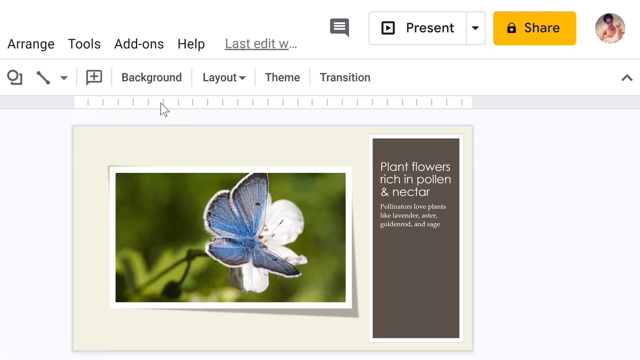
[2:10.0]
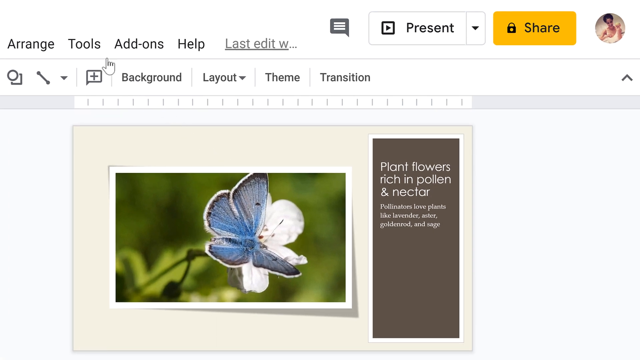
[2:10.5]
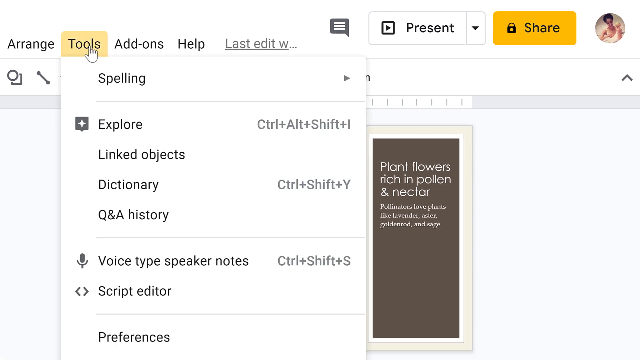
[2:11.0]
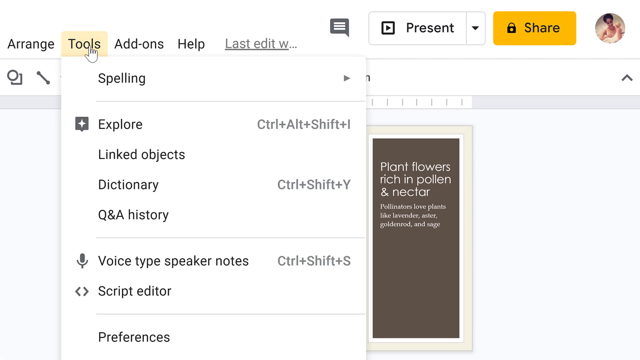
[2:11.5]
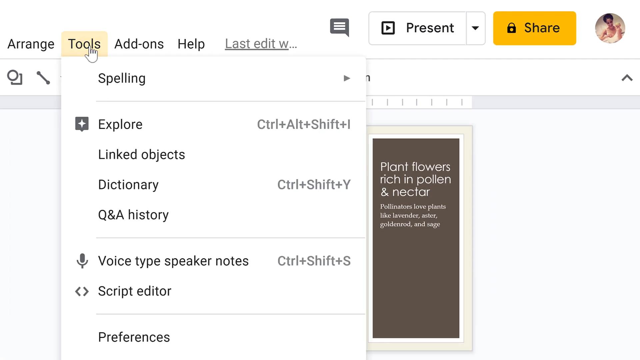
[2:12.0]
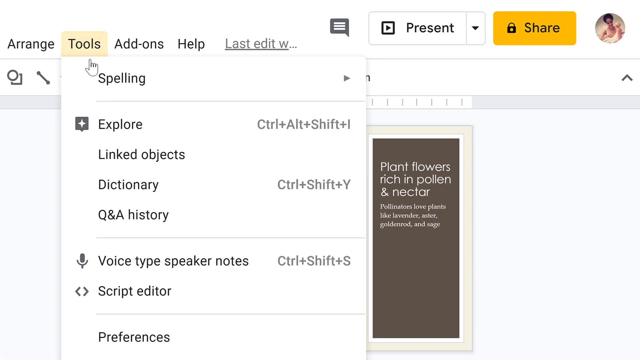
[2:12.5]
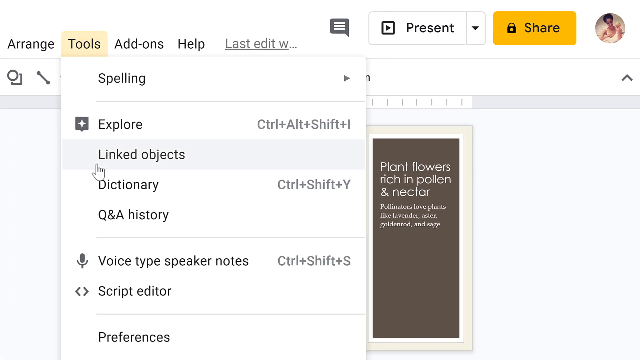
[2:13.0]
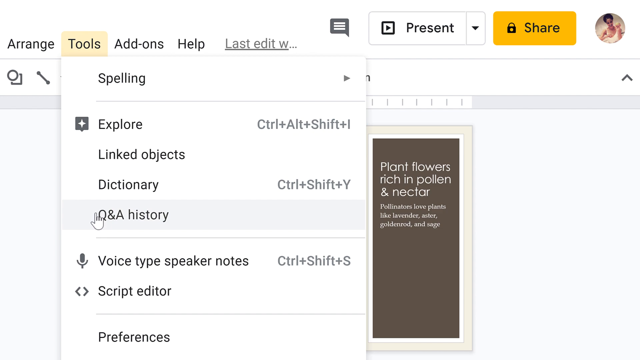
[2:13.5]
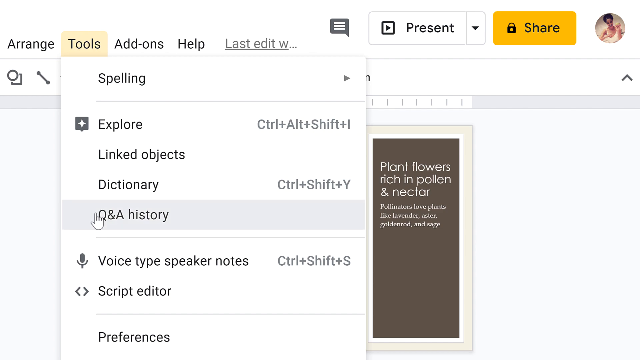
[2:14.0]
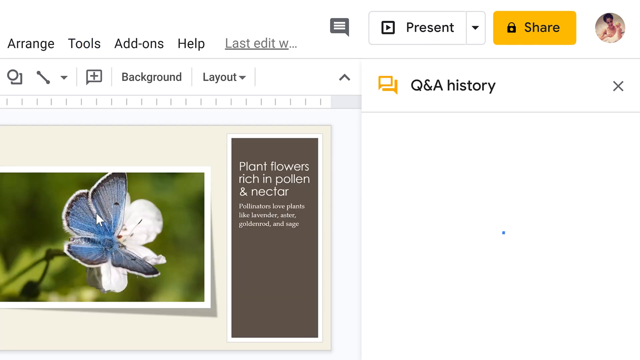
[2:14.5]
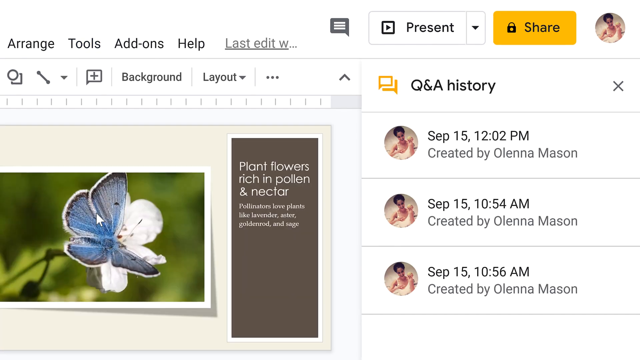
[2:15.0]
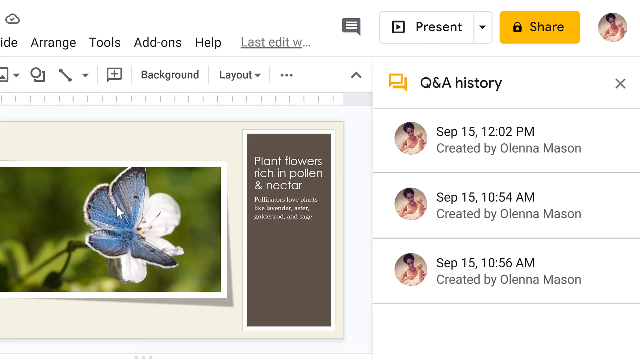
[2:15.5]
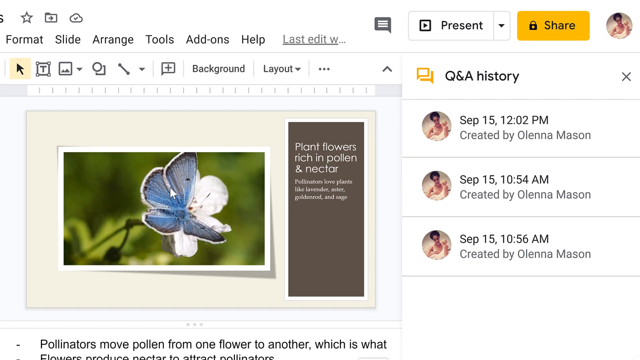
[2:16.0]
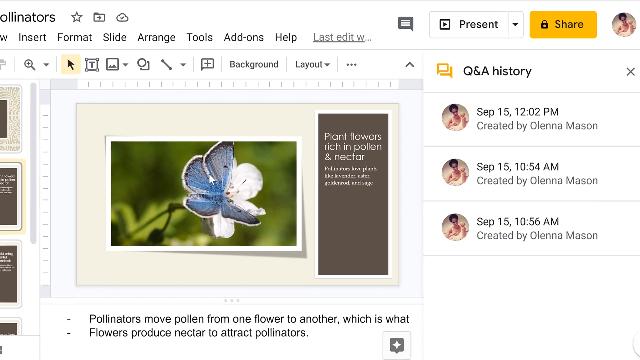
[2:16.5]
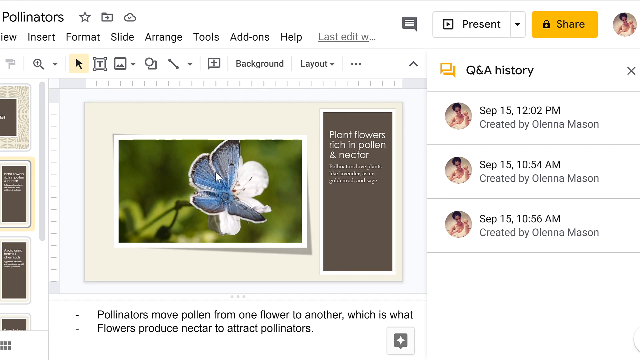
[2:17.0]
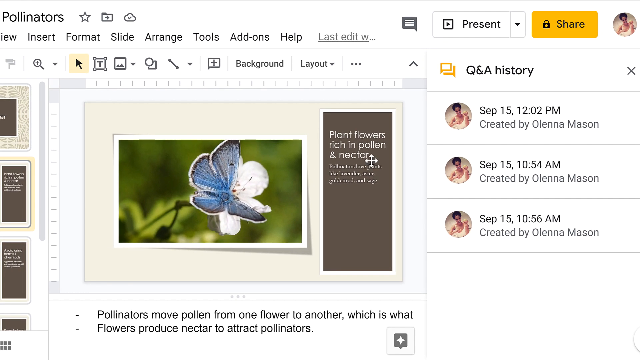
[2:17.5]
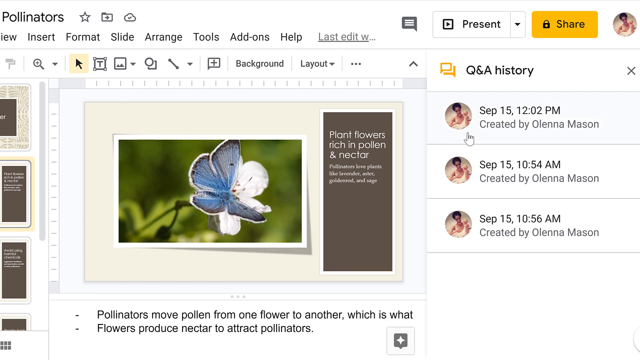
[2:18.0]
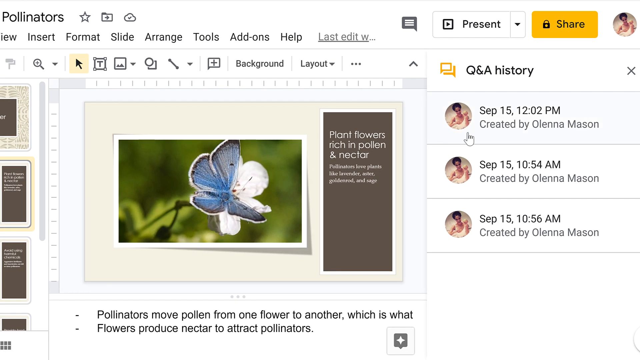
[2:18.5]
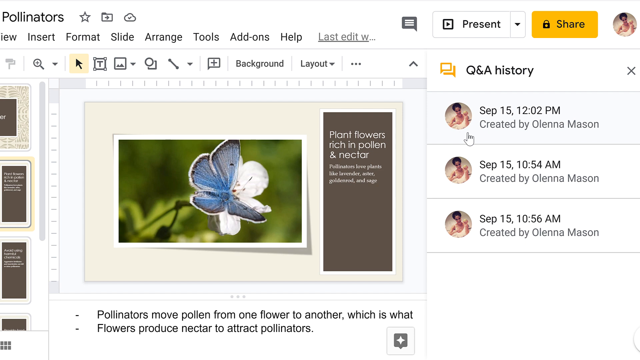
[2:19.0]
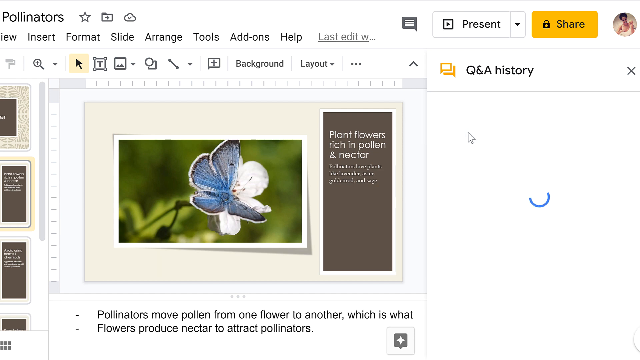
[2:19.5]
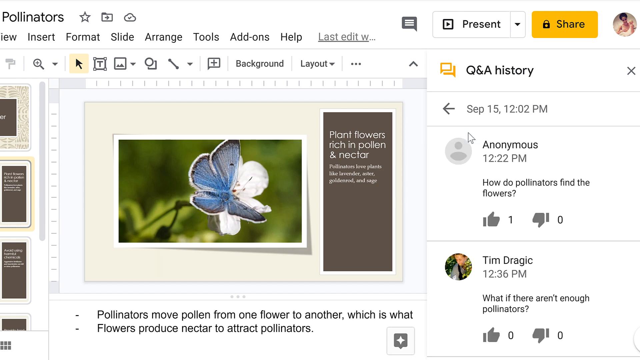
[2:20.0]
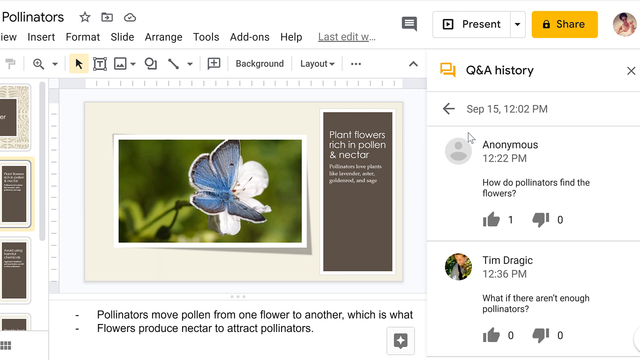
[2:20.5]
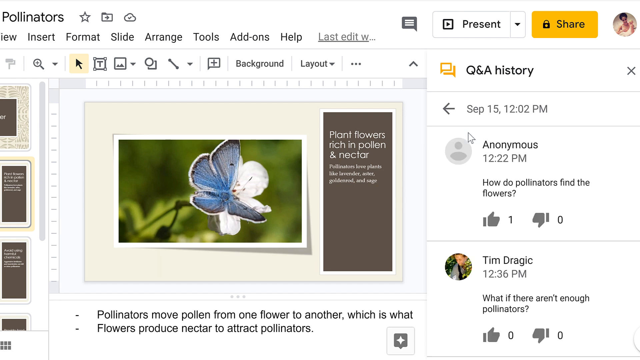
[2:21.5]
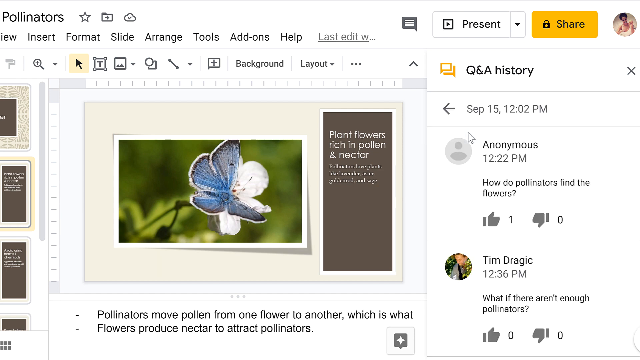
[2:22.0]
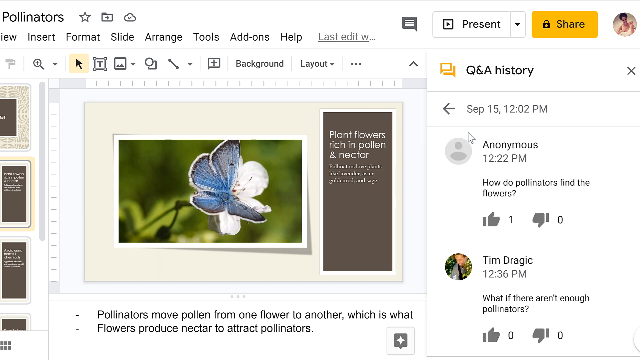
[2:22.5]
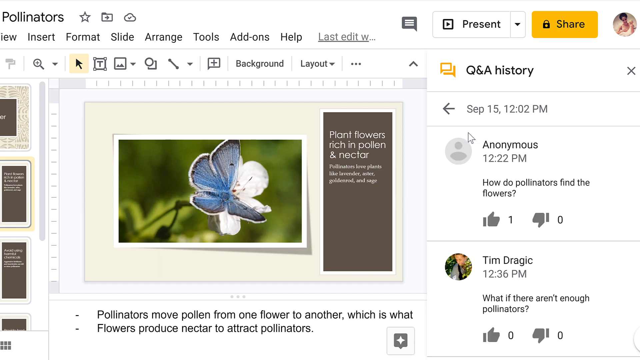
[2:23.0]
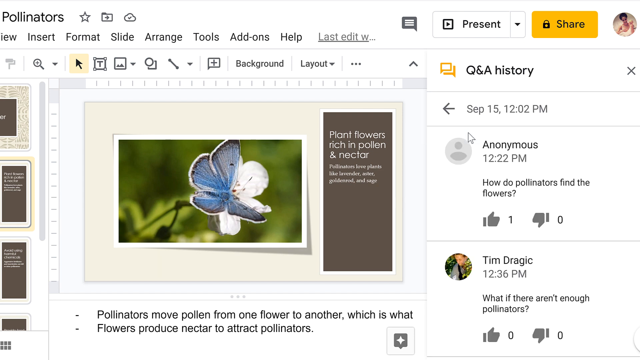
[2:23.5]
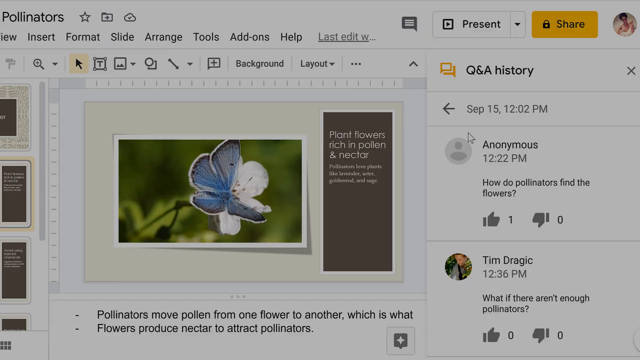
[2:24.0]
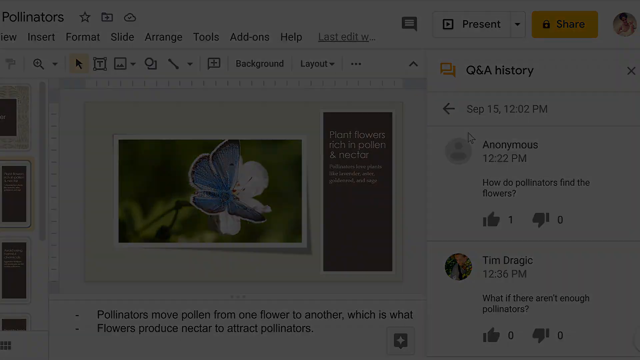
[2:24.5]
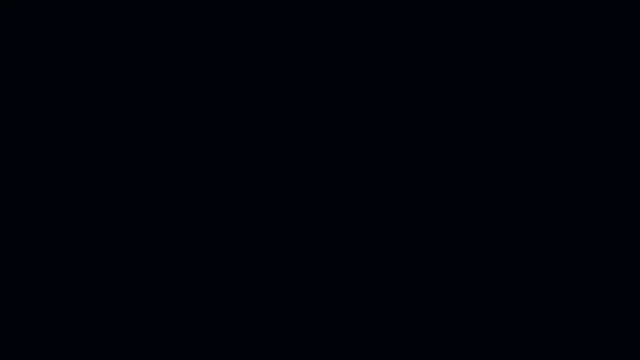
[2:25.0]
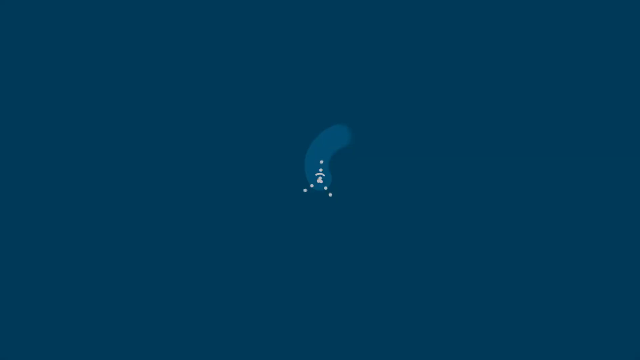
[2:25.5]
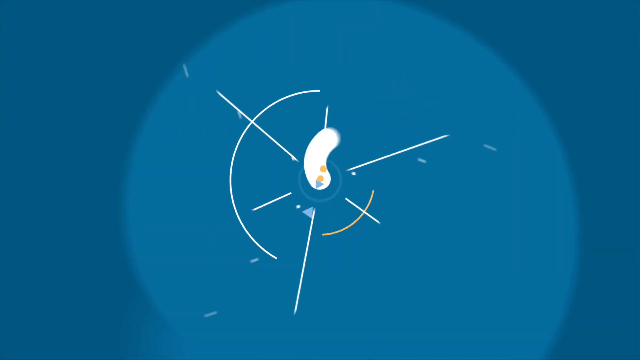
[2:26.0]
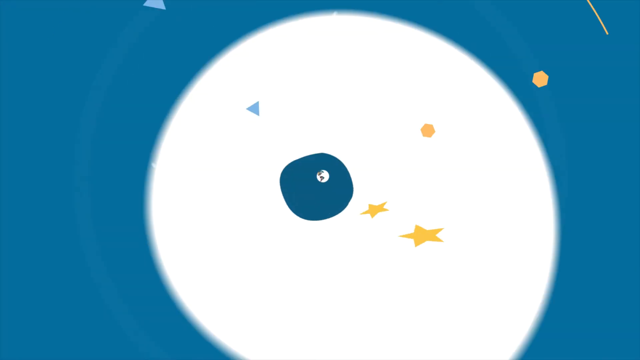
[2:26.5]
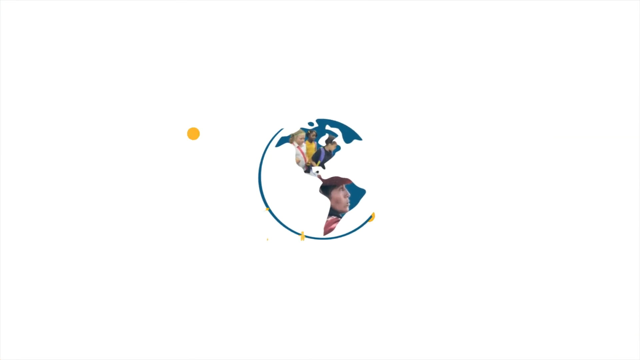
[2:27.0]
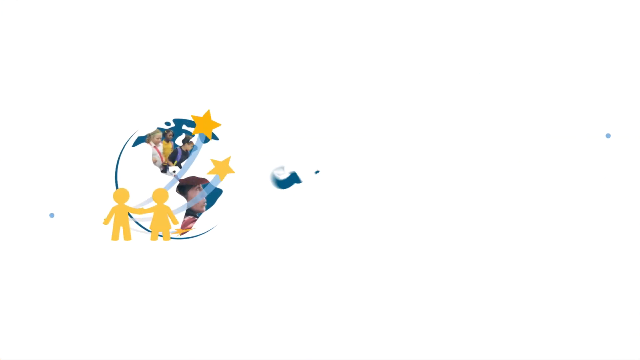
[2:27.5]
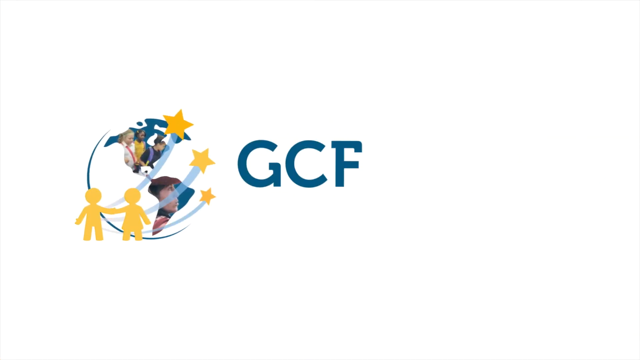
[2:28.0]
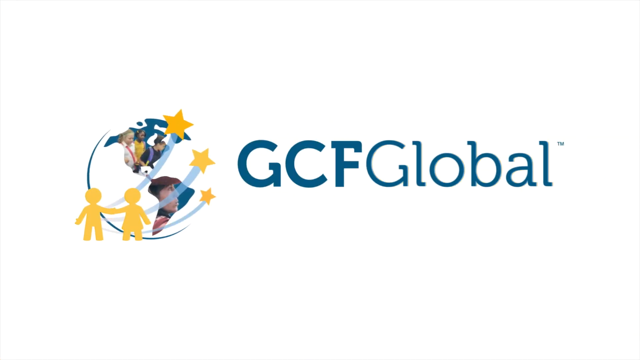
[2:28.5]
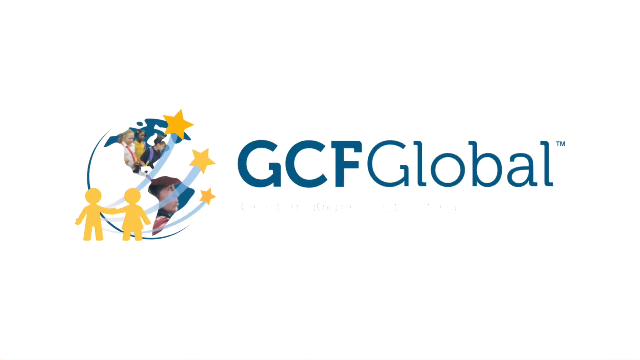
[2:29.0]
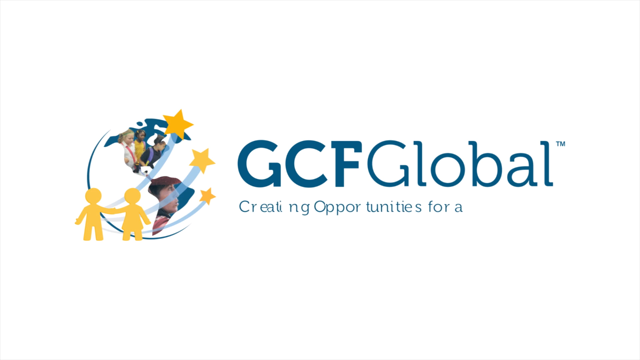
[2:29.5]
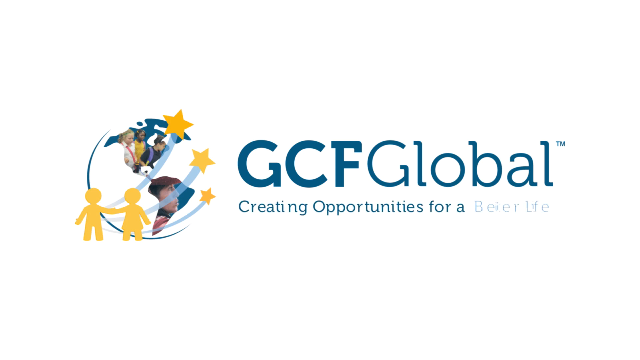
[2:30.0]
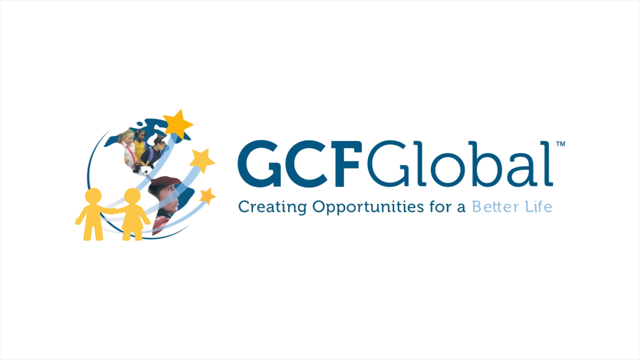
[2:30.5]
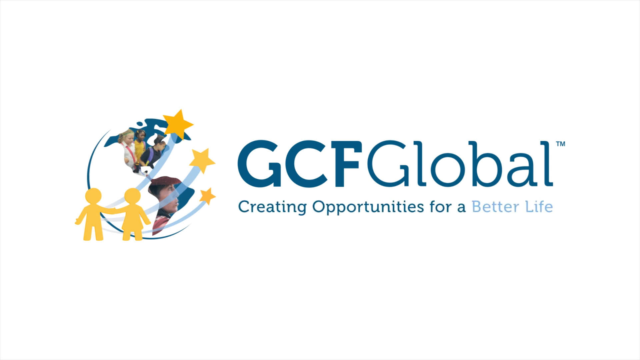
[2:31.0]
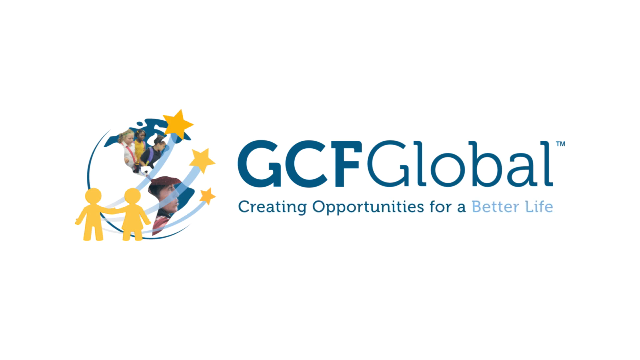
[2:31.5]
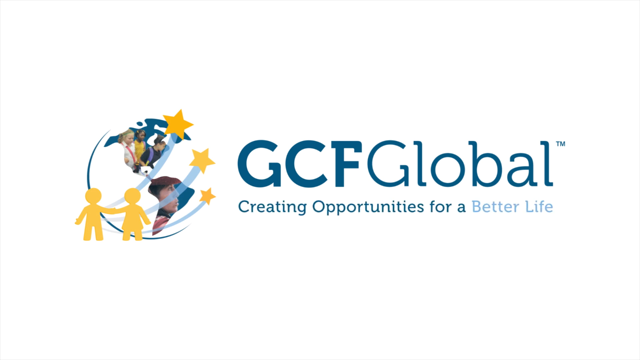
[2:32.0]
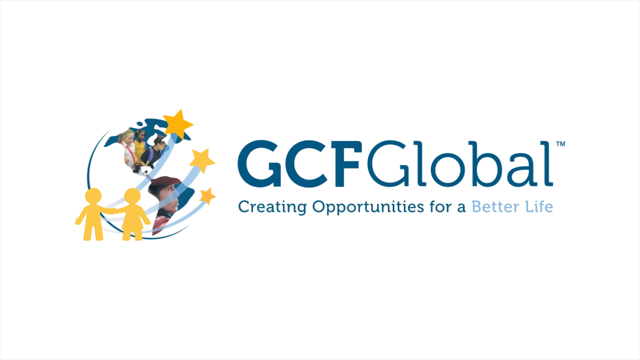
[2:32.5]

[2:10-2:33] A presentation screen with the topic Attracting Pollinators is shown with the main slide selected, showing a purple butterfly sitting on a white flower. The mouse pointer moves toward the Tools button in the home menu and clicks it, revealing a drop-down with options such as Spelling, Explored and Q&A History. Q&A History is selected and opens on the right side of the presentation screen, listing questions with a date, time, author name and profile picture. Clicking the first entry reveals two questions about pollination, one posted by Anonymous and one by Tim Dragic. The screen then transitions to an animated end screen showing GCF global with "creating opportunities for a better life" and its logo. The logo shows a map with children inside it, focusing on North and South America, and two yellow child icons with three stars.